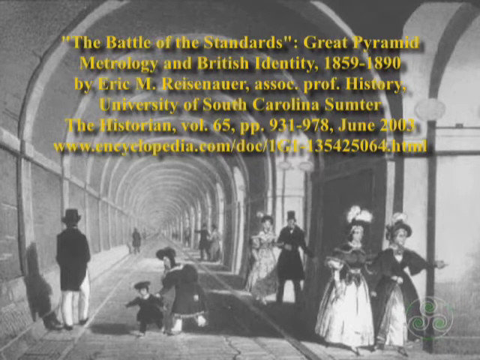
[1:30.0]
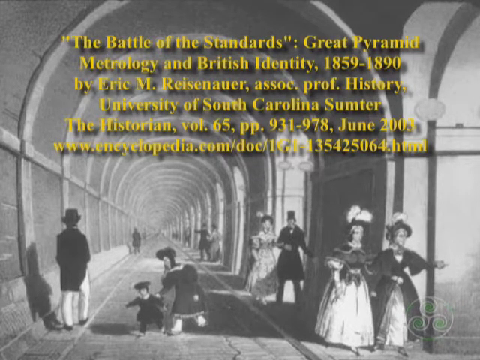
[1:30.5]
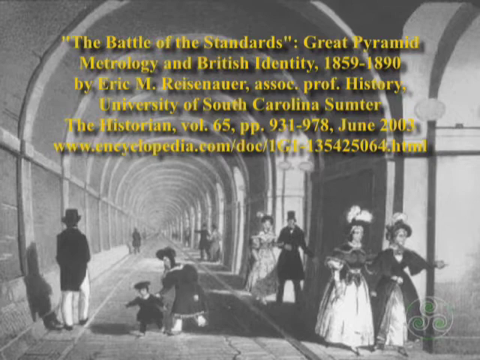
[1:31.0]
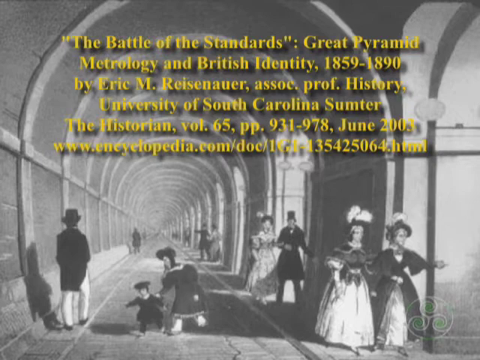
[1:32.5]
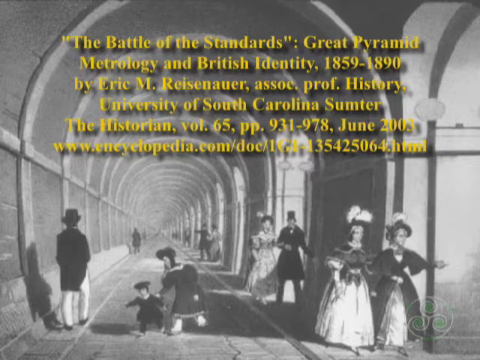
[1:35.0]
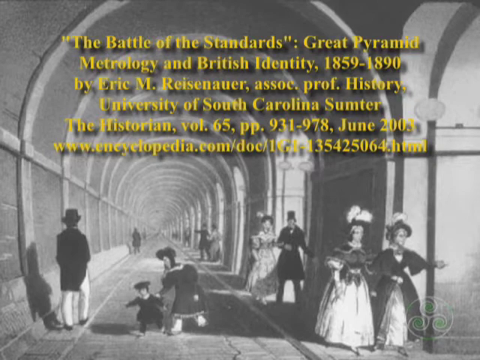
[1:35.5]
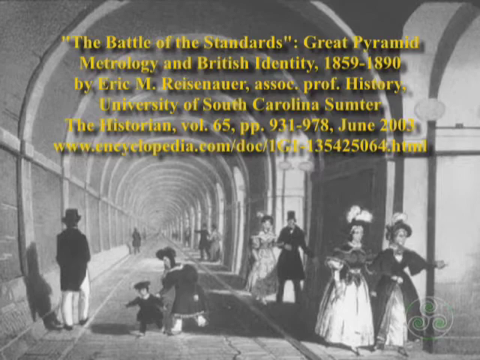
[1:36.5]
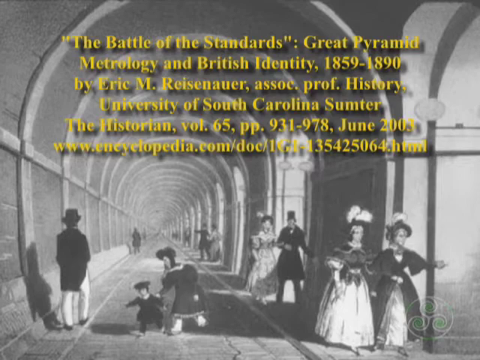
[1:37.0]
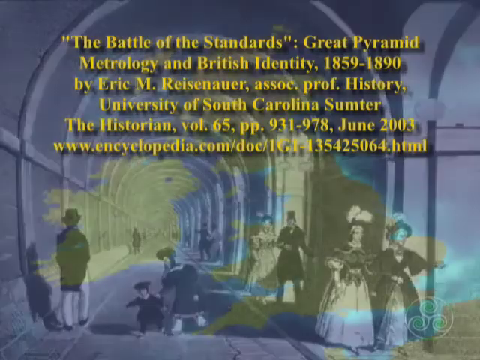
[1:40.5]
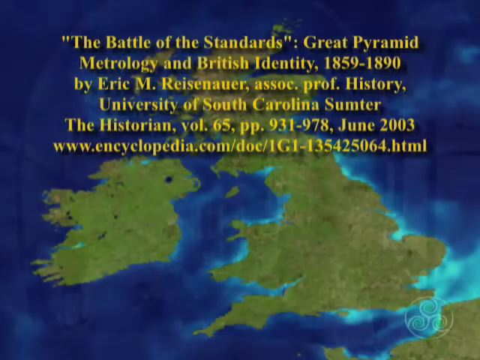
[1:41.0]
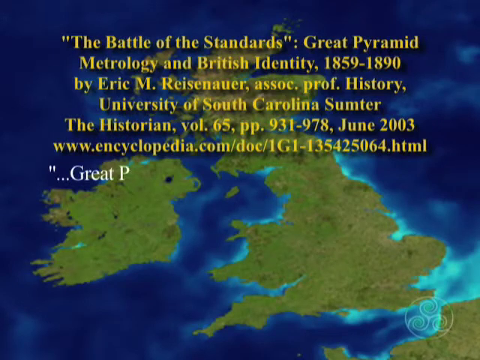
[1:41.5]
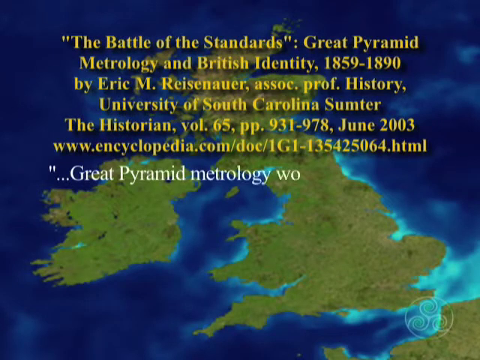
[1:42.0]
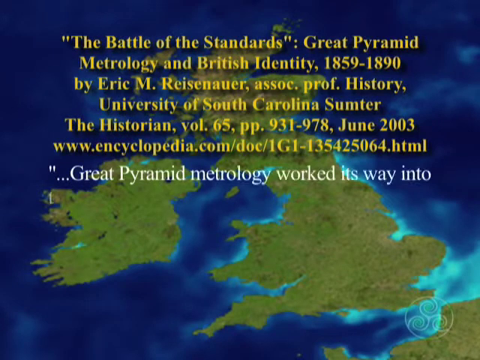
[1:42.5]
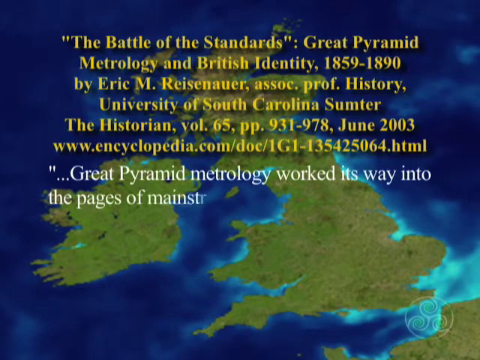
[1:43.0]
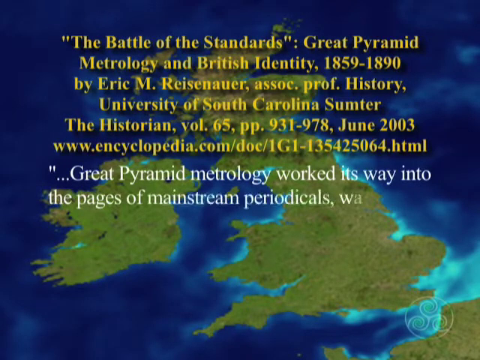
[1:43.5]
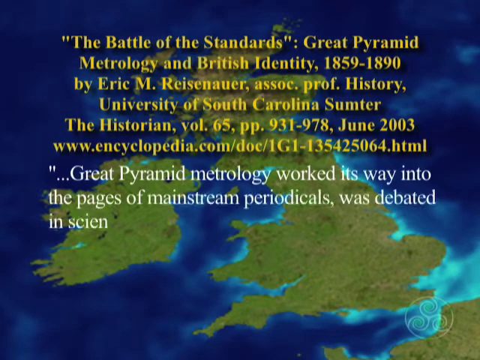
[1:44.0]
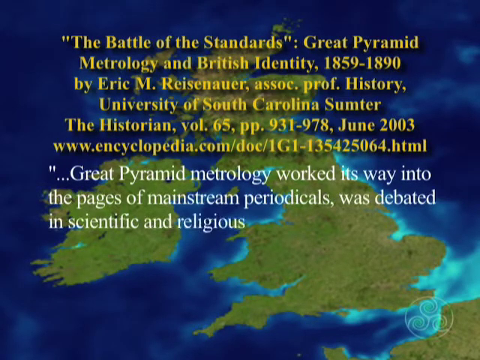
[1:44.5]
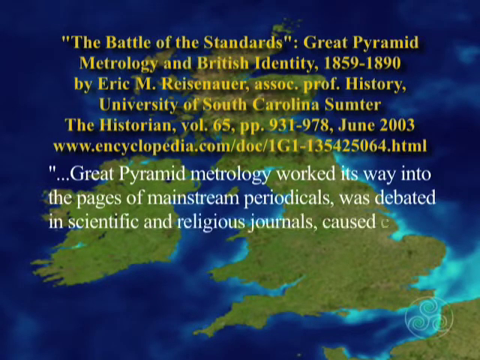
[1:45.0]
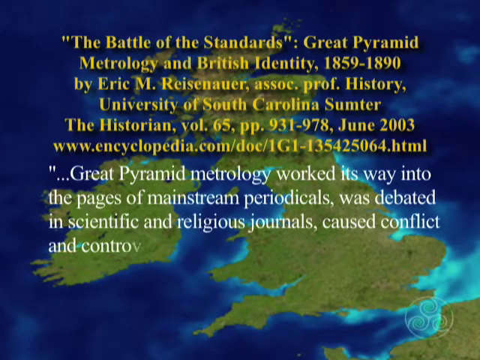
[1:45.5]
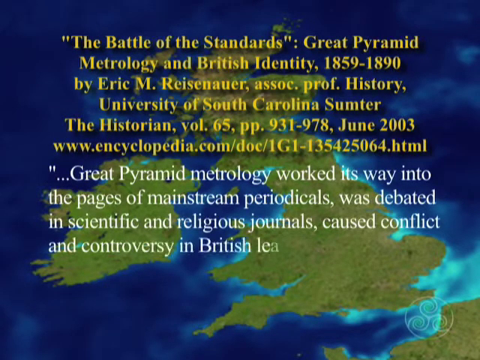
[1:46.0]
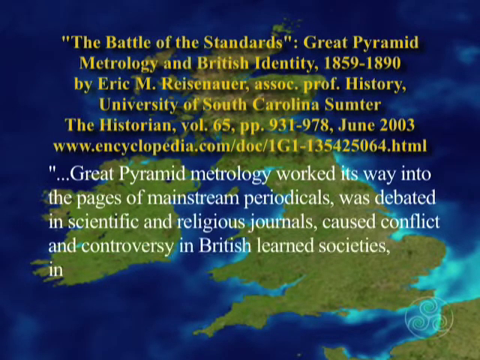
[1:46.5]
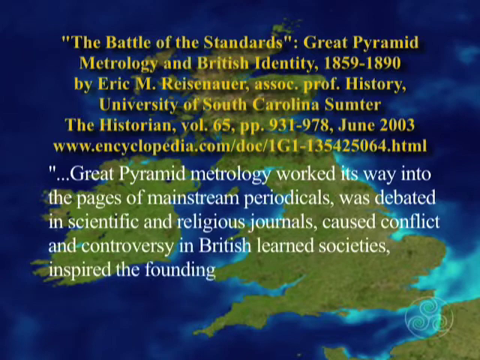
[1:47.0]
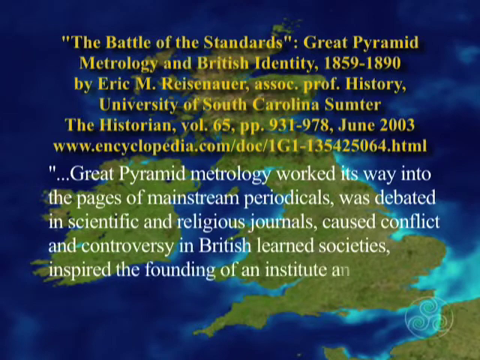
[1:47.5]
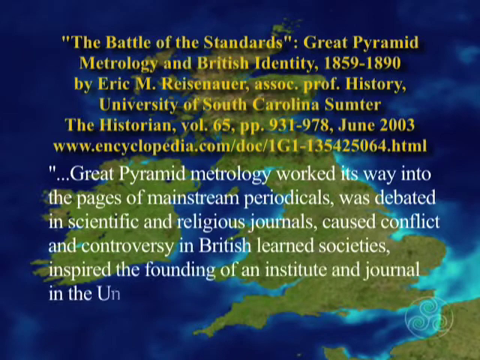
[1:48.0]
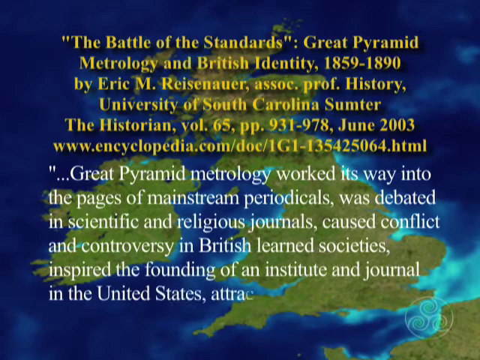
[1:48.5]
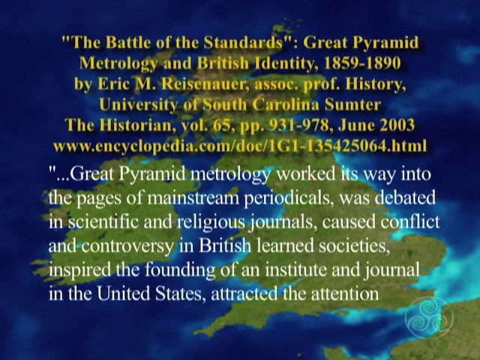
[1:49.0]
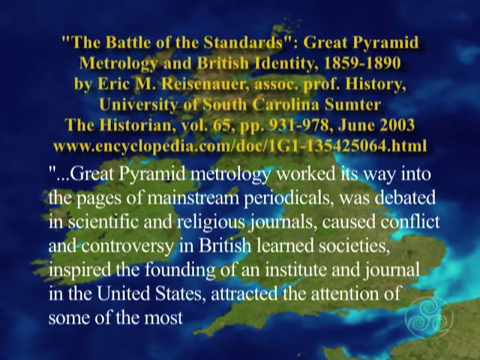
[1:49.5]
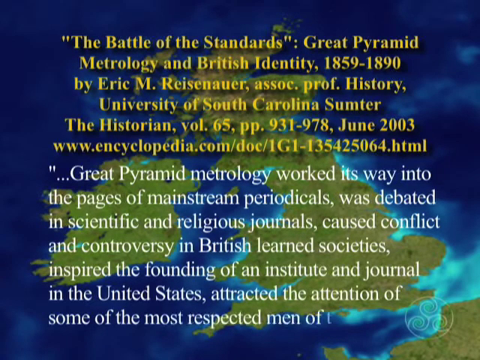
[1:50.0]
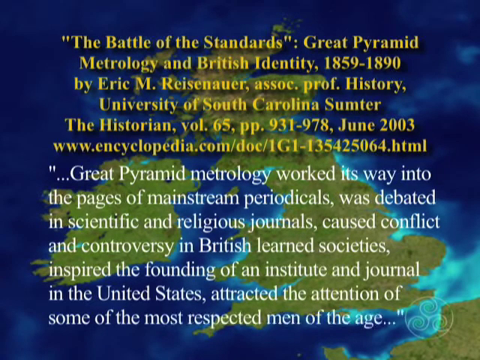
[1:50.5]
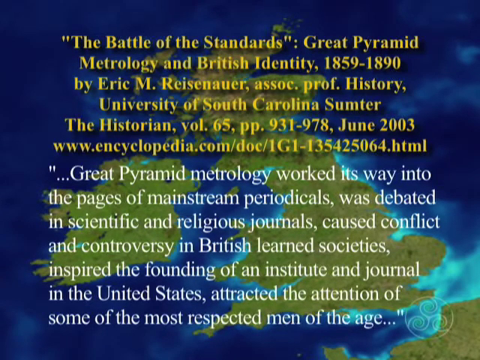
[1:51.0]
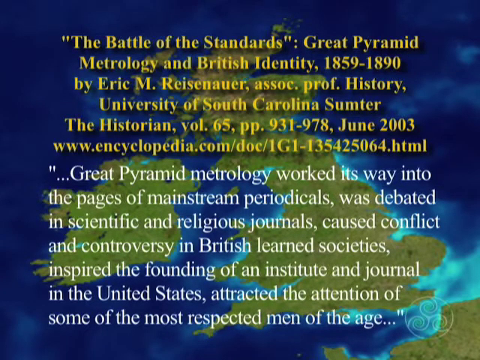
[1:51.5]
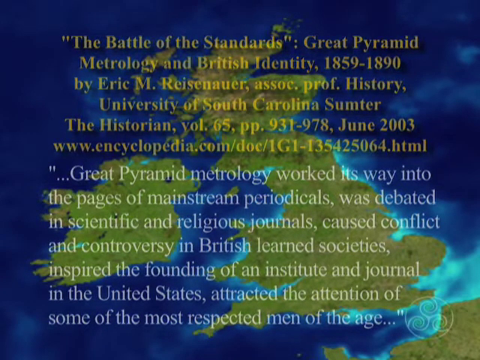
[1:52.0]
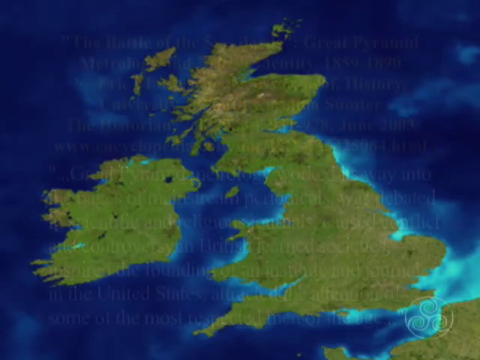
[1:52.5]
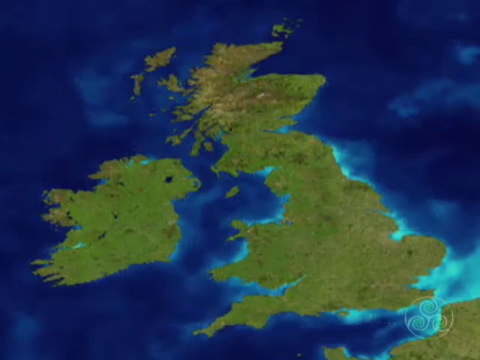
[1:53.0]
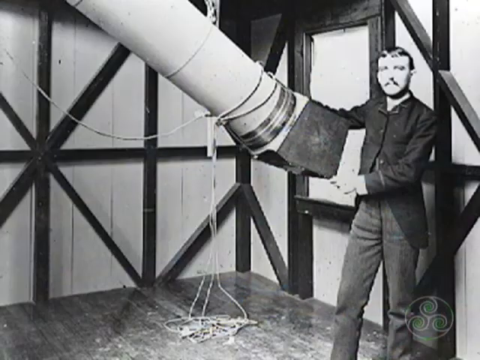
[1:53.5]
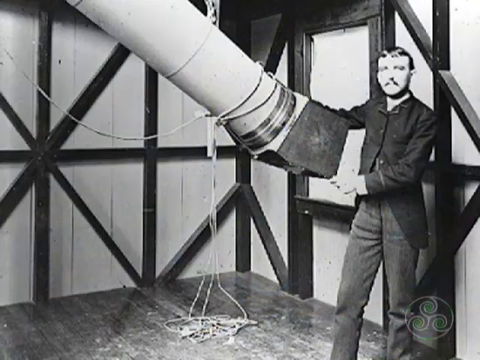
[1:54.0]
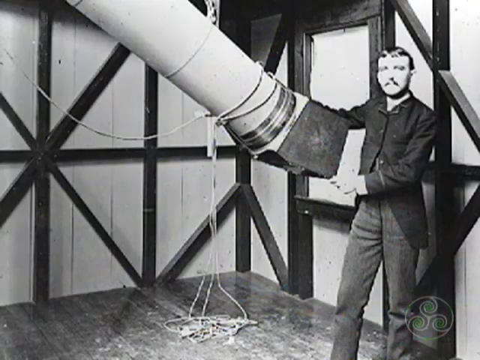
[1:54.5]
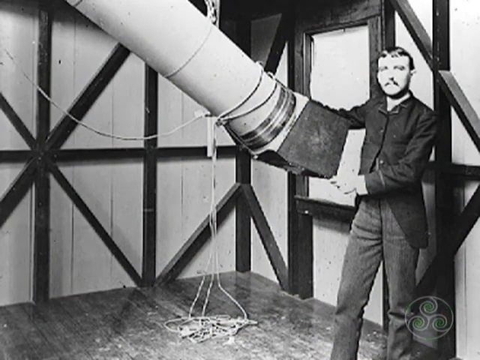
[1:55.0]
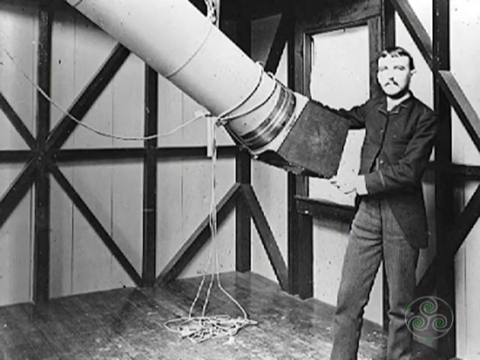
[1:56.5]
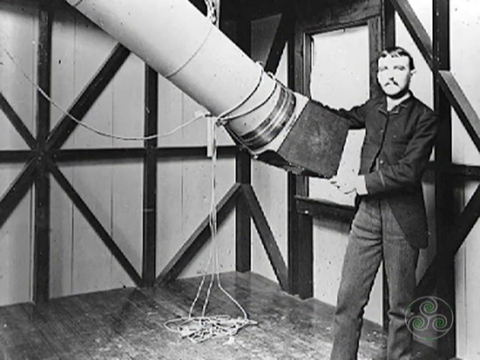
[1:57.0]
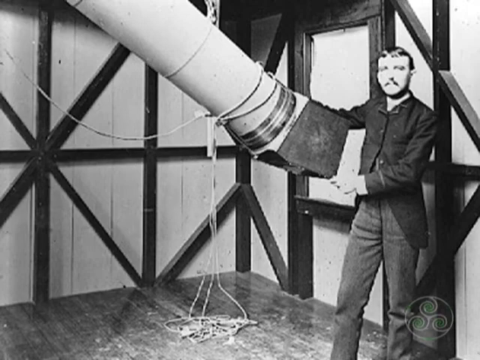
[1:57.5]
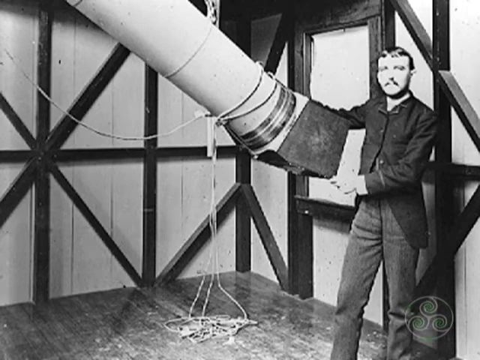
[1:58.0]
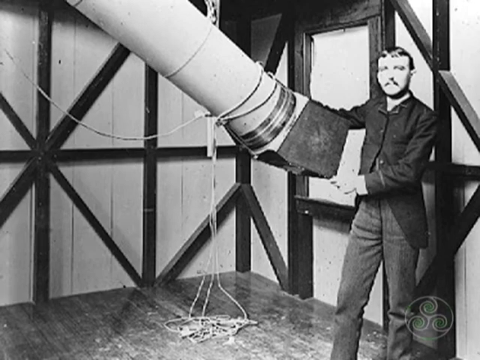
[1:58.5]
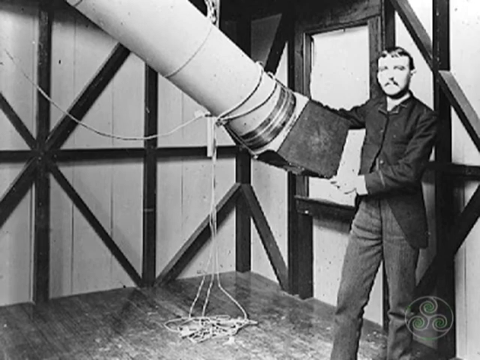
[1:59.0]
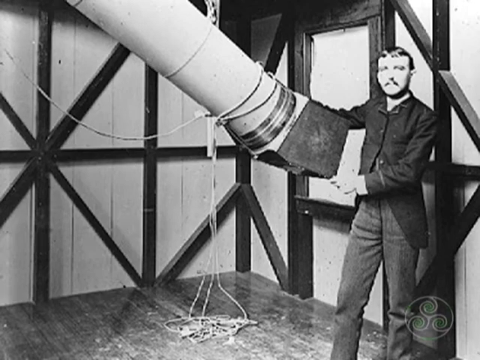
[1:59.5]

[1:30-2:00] A lot of white text appears on a black and white background. The text includes "great pyramid metrology" and "encyclopedia.com". A map shows a green area of land on the left over blue water in the background. The text is very low quality.